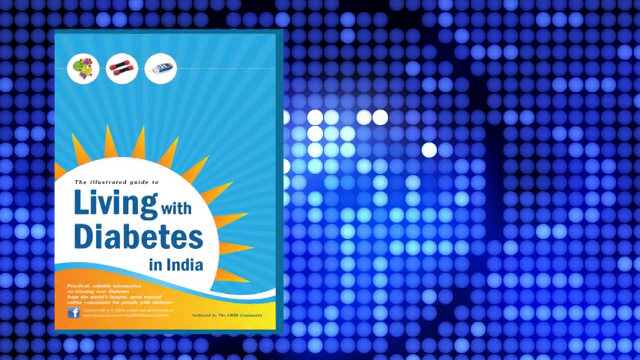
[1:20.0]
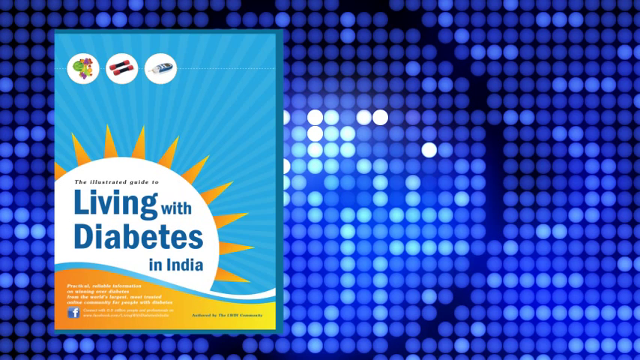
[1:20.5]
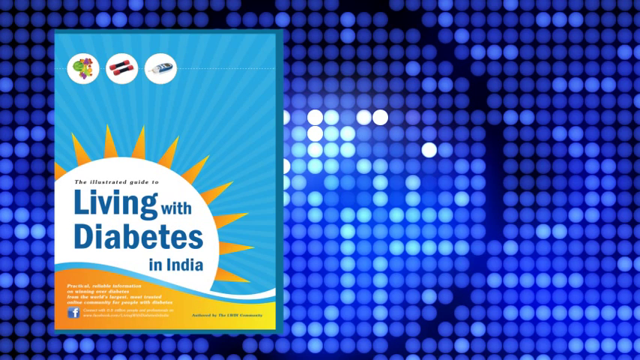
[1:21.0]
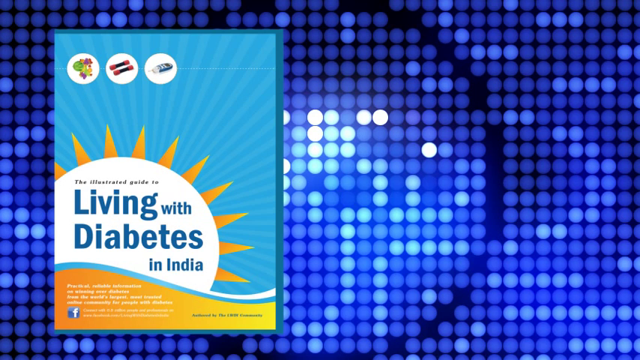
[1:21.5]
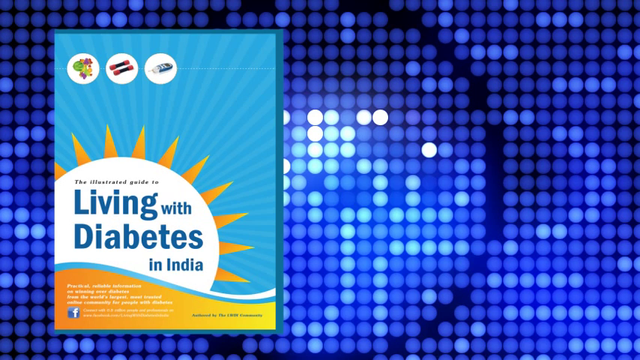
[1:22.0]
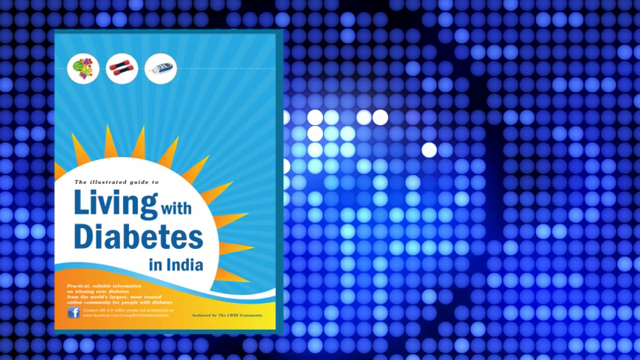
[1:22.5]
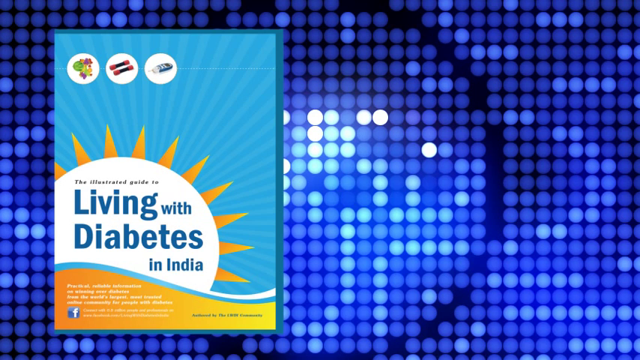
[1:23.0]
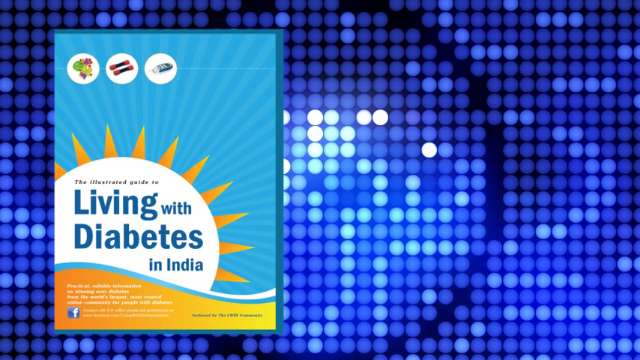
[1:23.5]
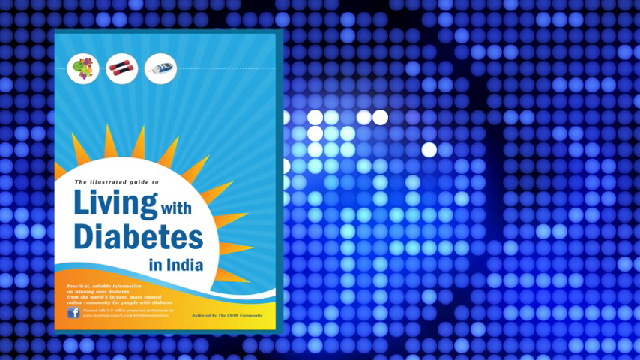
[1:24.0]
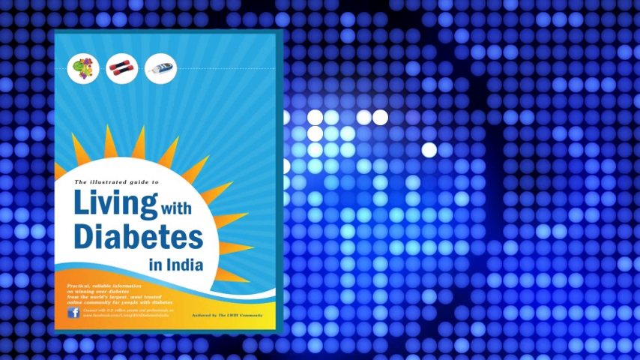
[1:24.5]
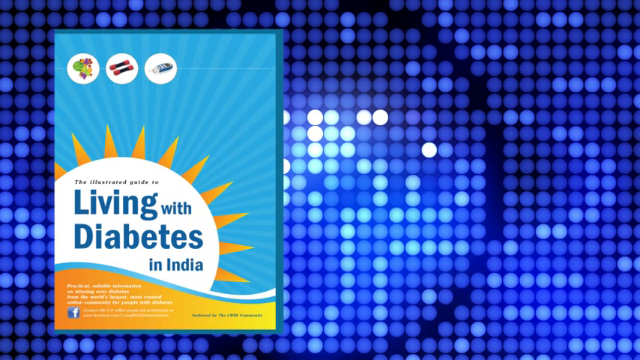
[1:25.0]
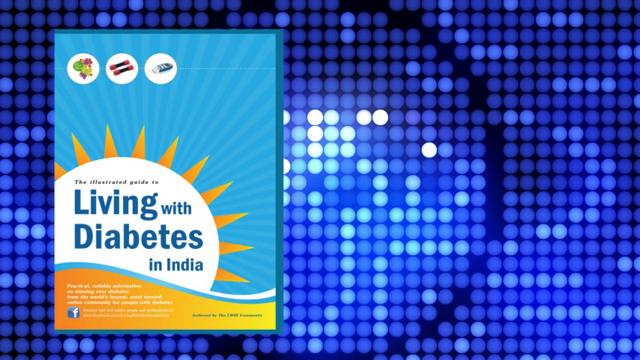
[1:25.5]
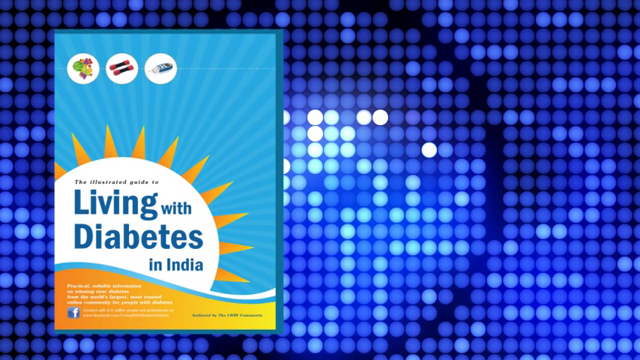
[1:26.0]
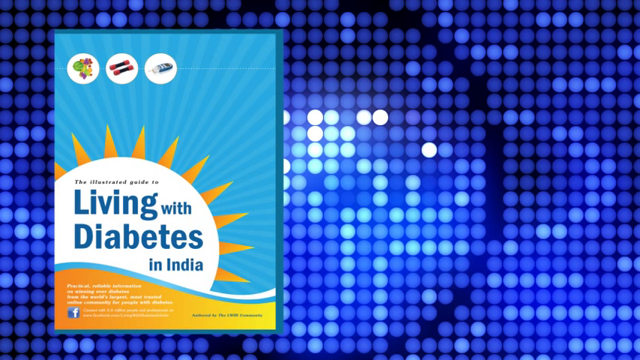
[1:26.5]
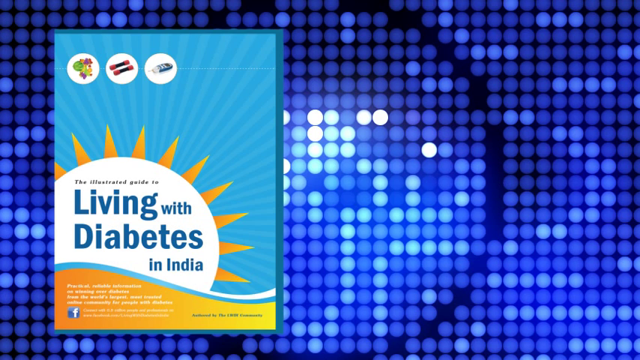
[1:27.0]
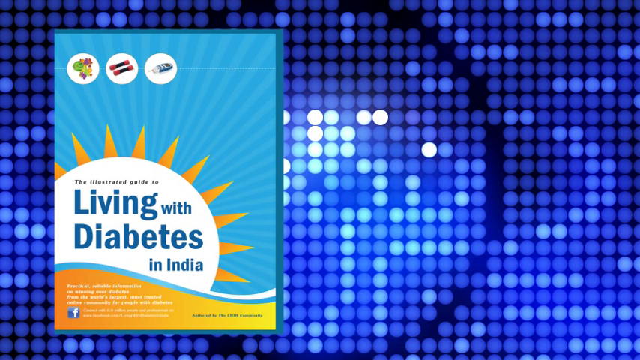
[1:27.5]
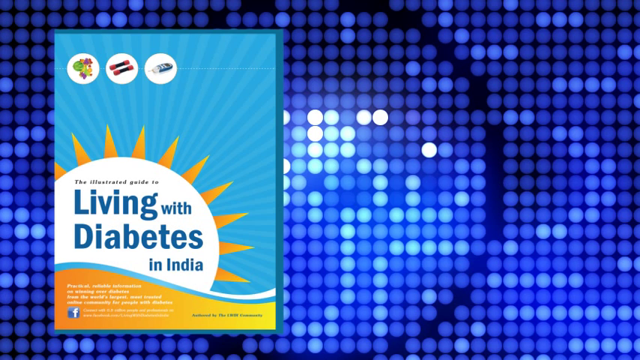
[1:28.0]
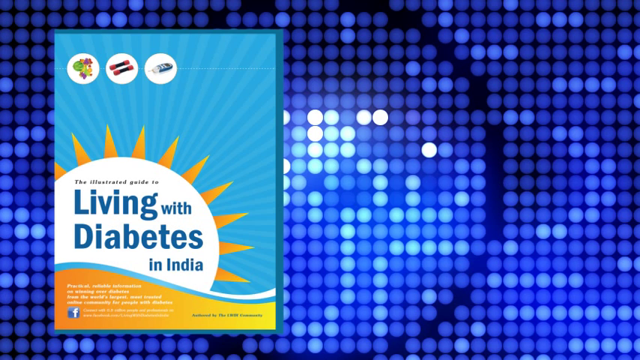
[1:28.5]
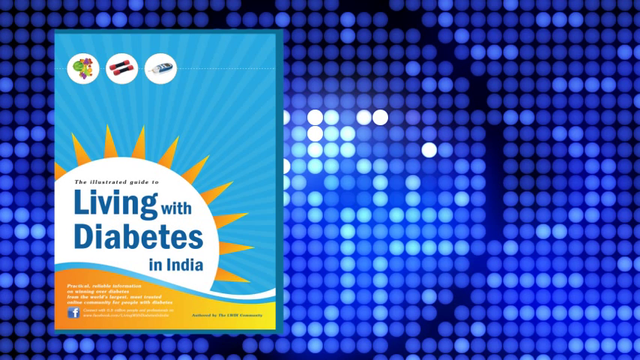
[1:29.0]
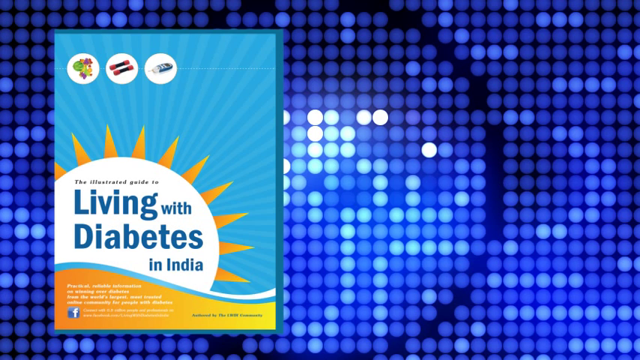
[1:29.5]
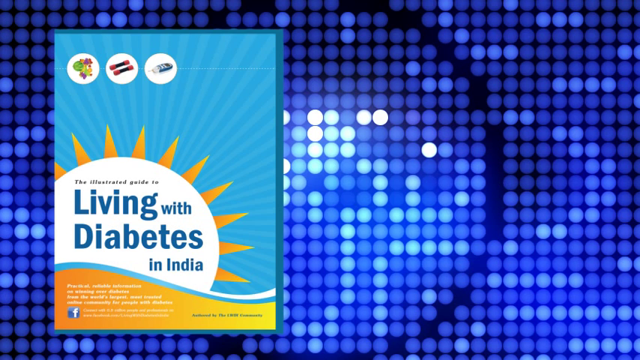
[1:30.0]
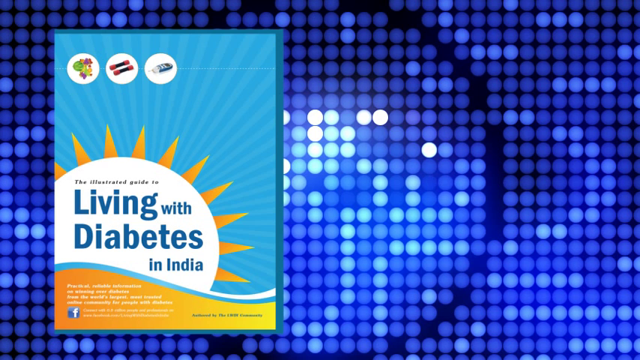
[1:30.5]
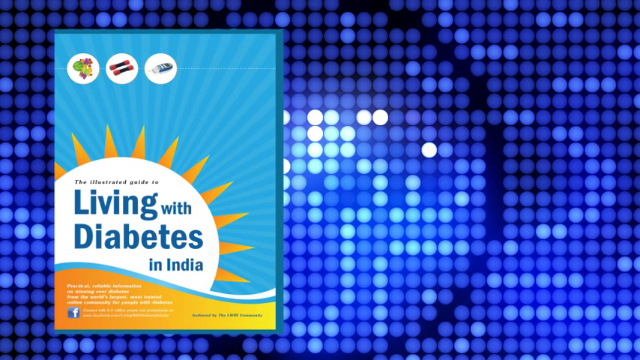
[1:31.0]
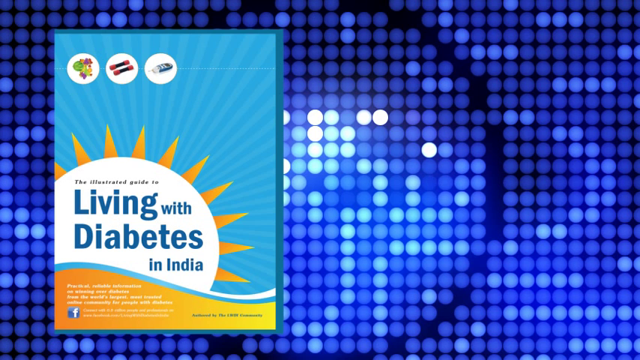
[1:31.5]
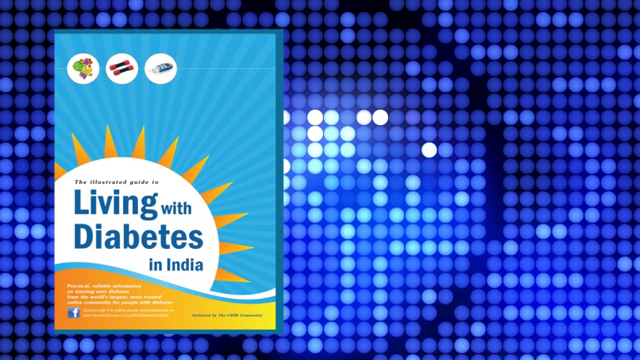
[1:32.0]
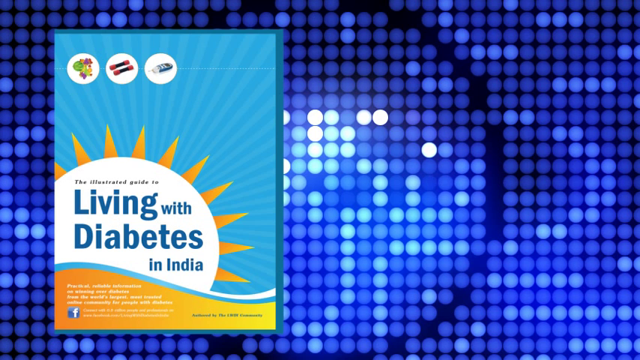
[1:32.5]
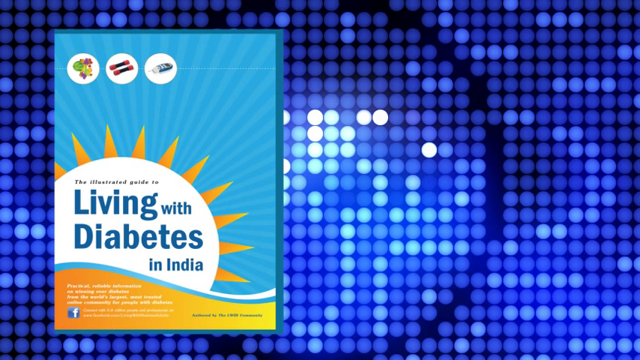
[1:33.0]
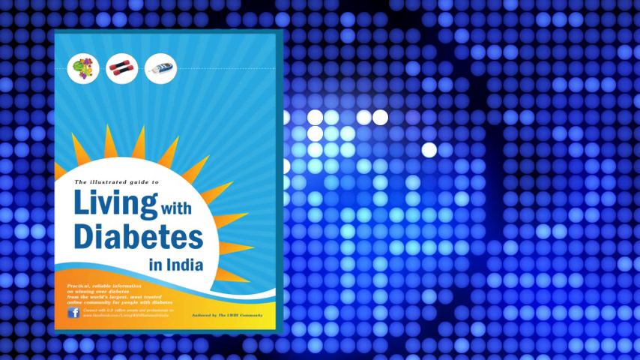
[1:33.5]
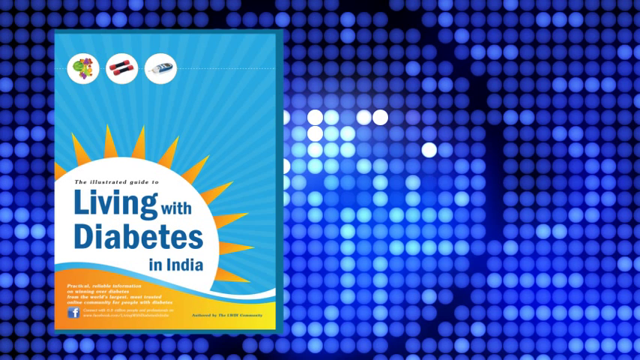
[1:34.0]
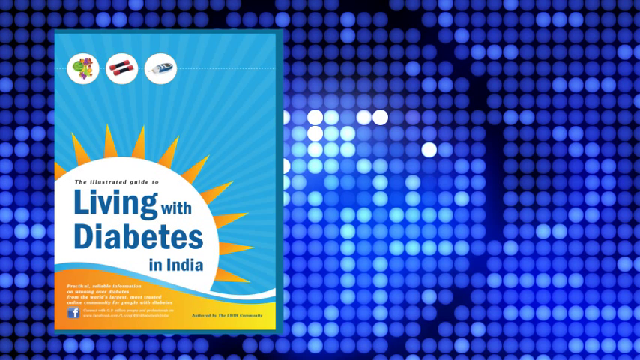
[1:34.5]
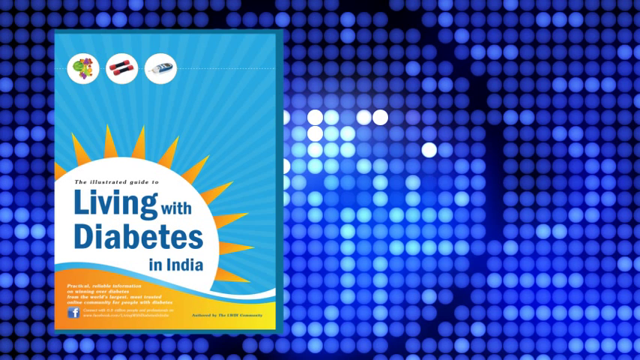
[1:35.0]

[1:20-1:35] The book "the illustrated guide to living with diabetes in India" is on the left. Its cover has a sun with the writing in the middle: a white circle with yellow and orange rays coming off it, and a blue sky behind it. Behind everything are small dots, a few white but most of them blues of different colors. There is no animation or change; it is just a view of the front of the book. At the bottom of the cover is a yellow swoop, maybe meant to imitate sand, higher on the left and shorter on the right, with small white writing on it that is too small to read.